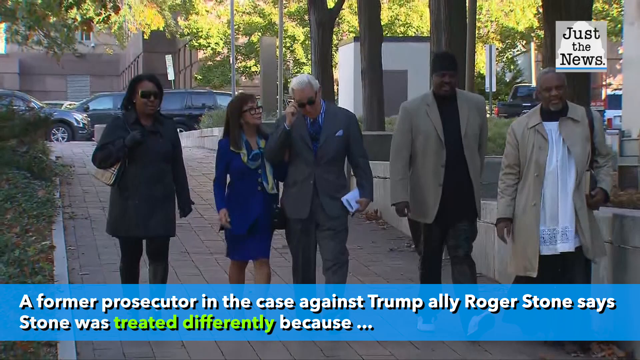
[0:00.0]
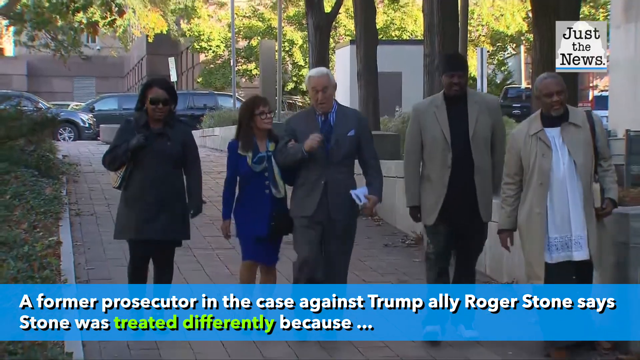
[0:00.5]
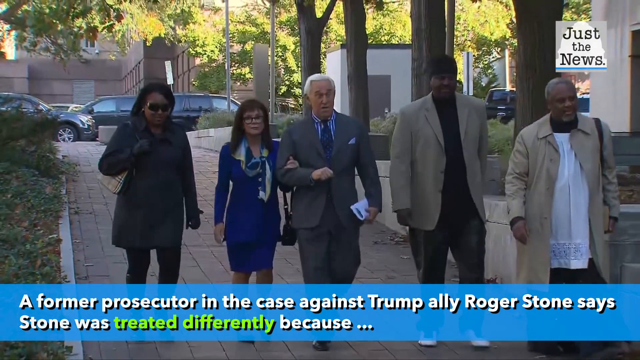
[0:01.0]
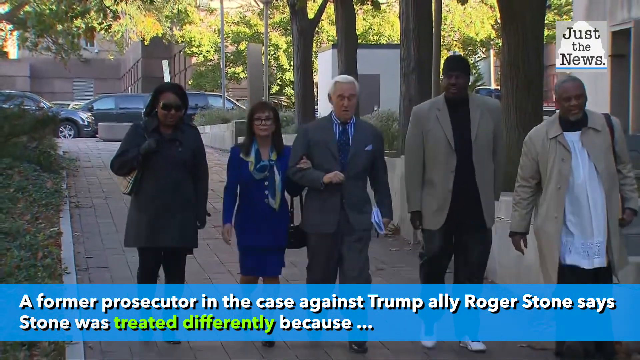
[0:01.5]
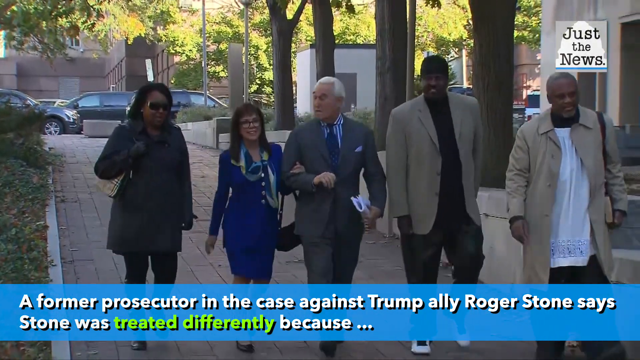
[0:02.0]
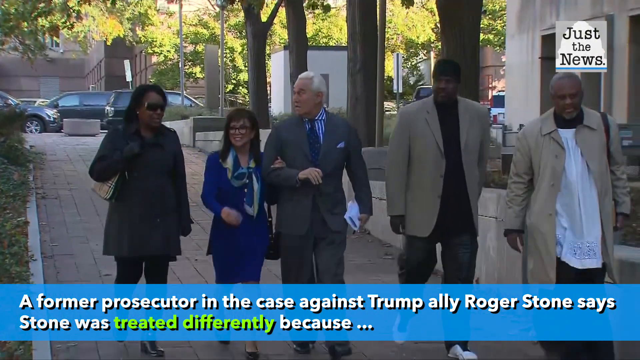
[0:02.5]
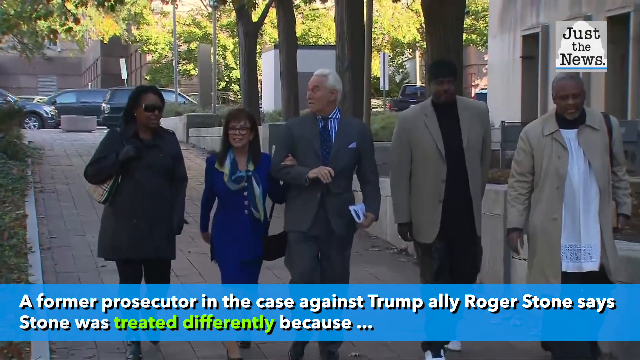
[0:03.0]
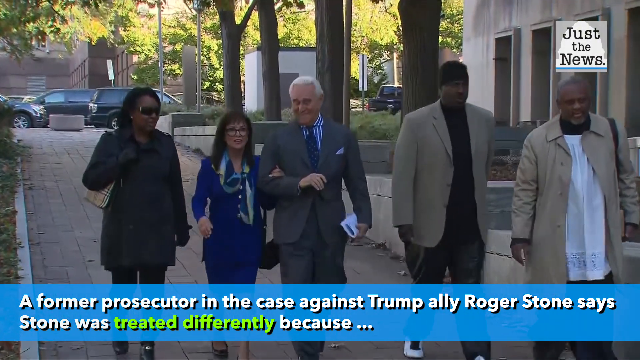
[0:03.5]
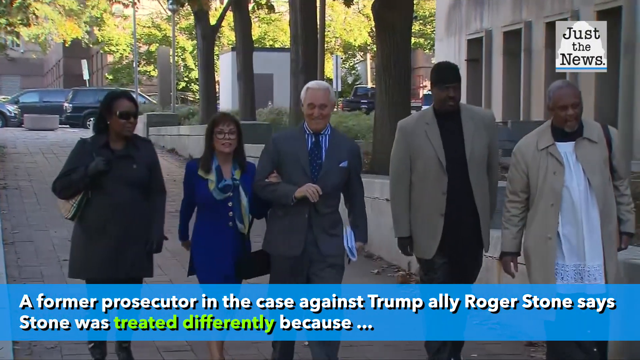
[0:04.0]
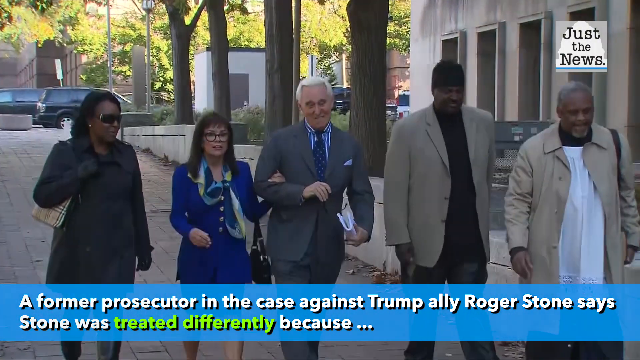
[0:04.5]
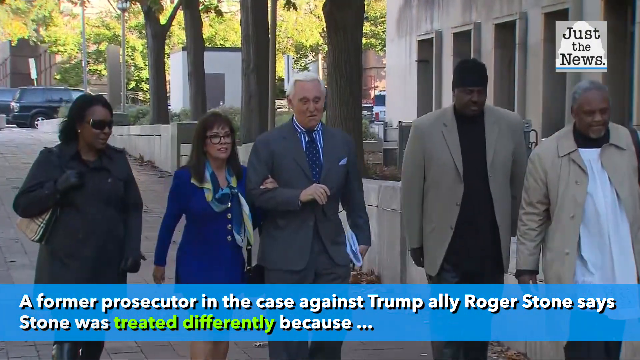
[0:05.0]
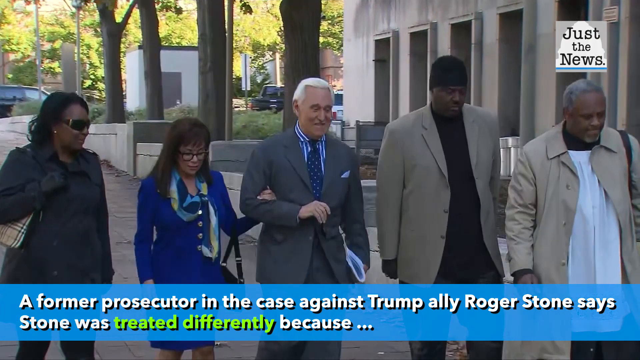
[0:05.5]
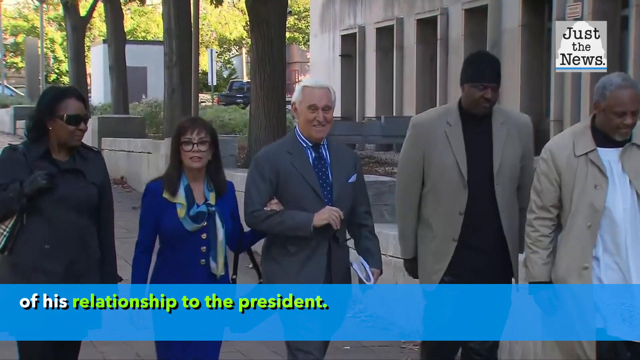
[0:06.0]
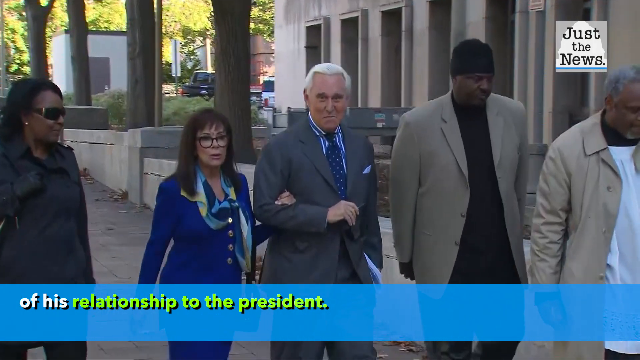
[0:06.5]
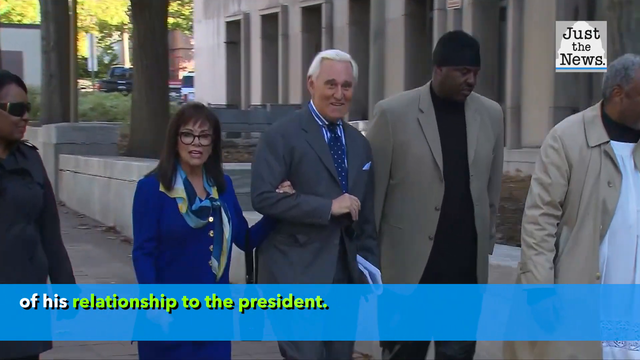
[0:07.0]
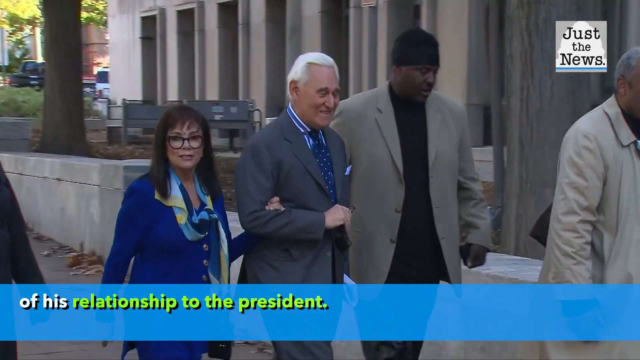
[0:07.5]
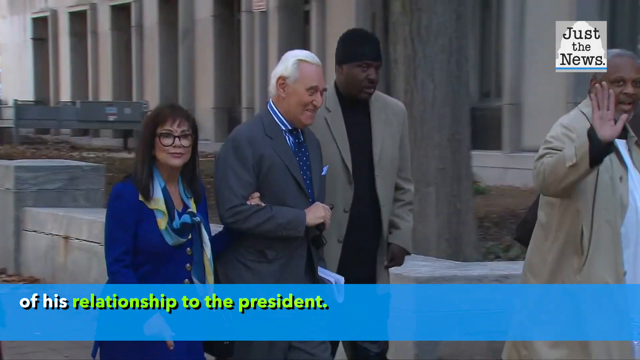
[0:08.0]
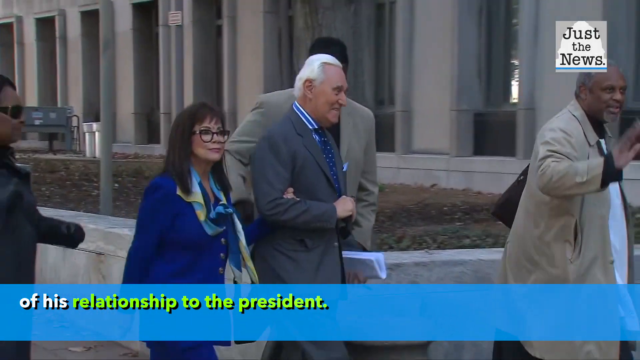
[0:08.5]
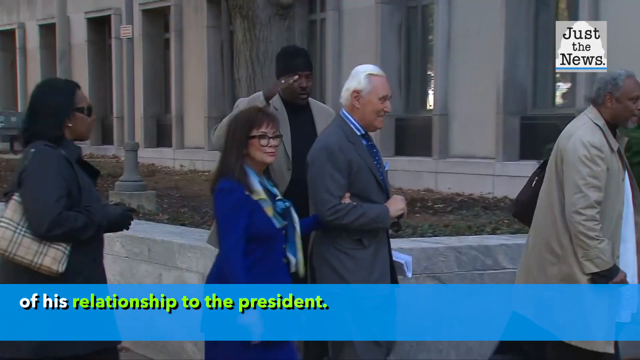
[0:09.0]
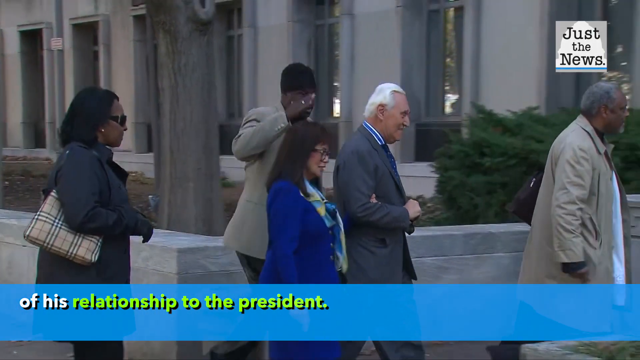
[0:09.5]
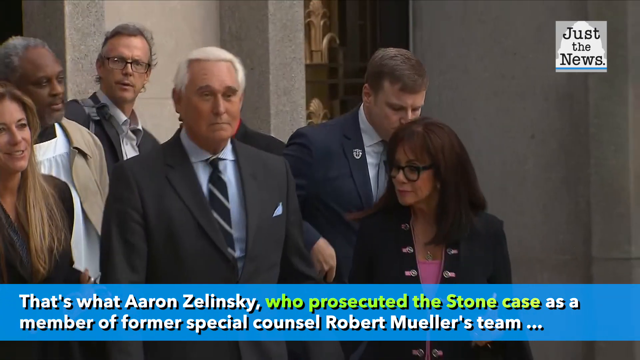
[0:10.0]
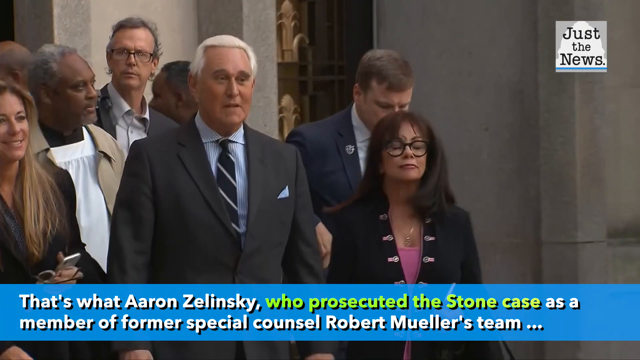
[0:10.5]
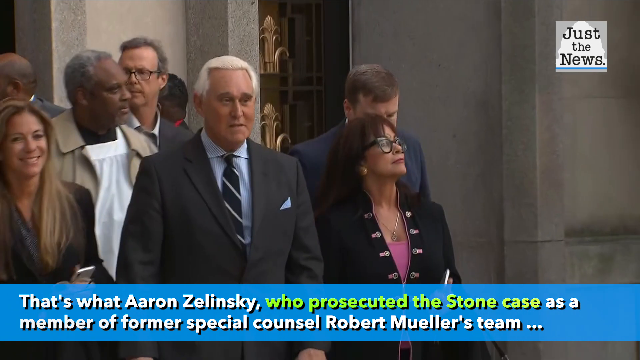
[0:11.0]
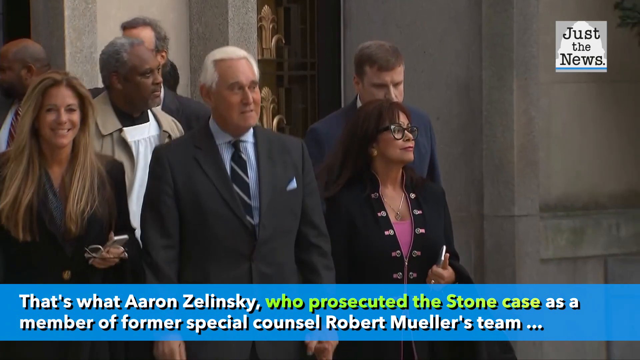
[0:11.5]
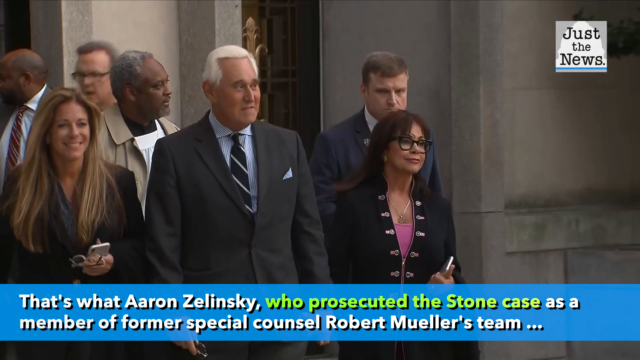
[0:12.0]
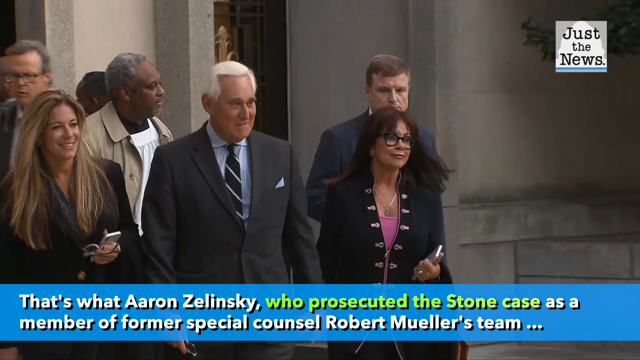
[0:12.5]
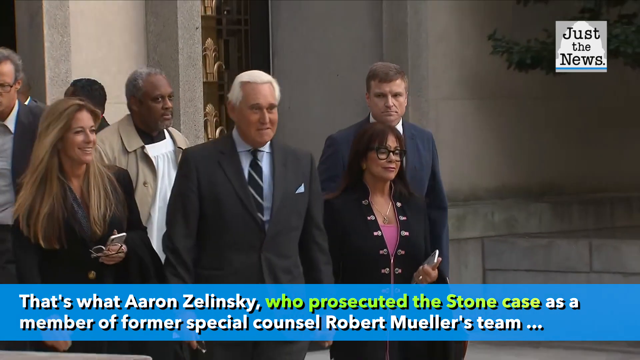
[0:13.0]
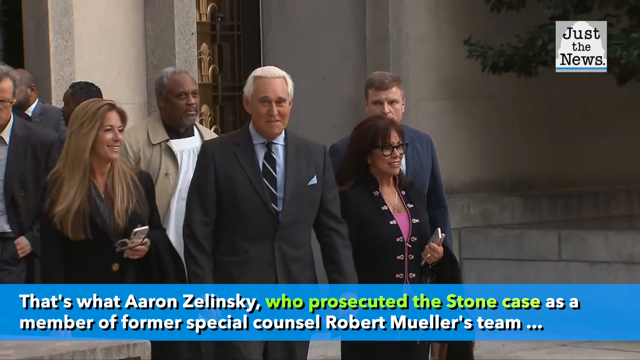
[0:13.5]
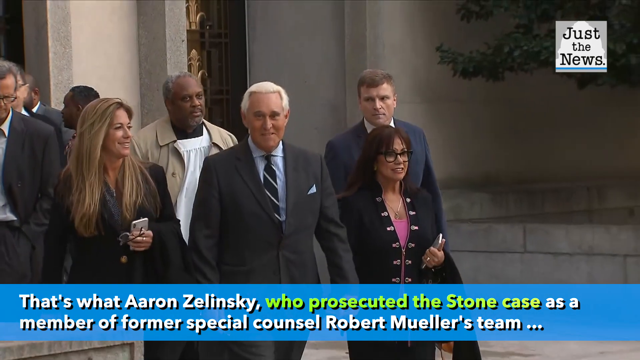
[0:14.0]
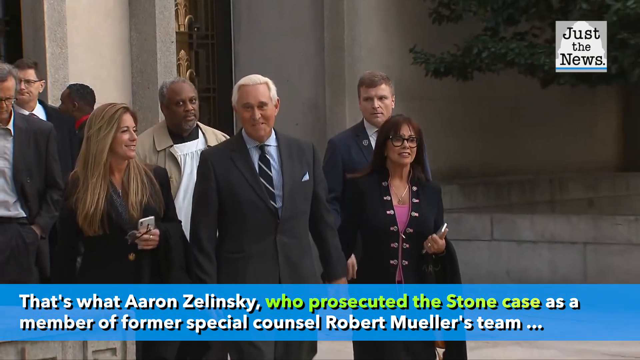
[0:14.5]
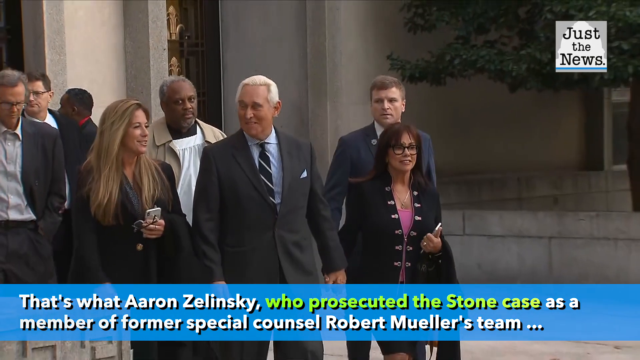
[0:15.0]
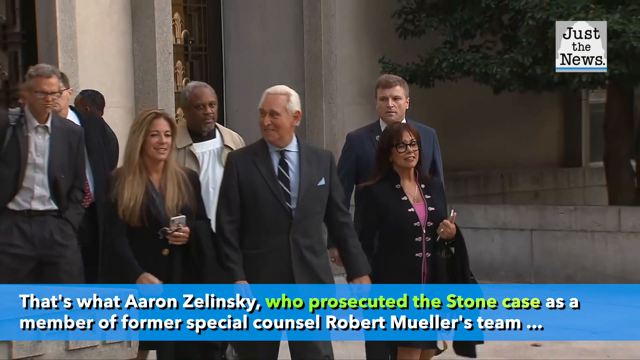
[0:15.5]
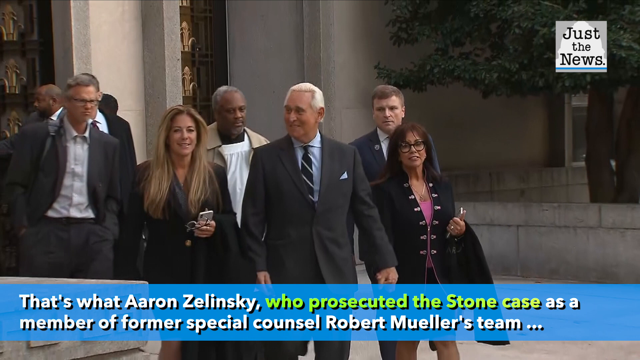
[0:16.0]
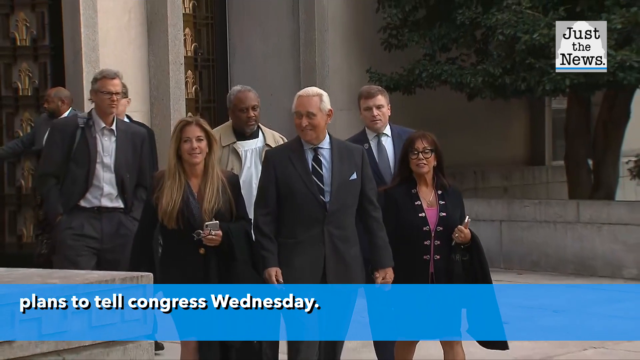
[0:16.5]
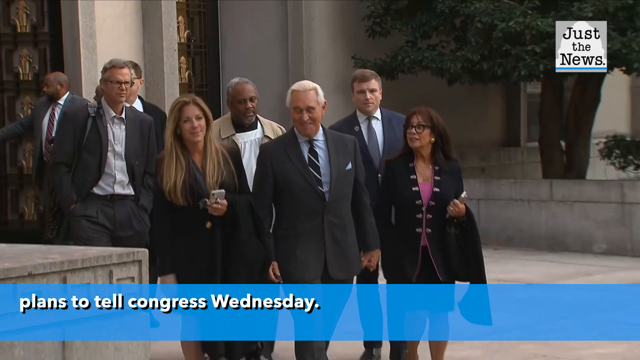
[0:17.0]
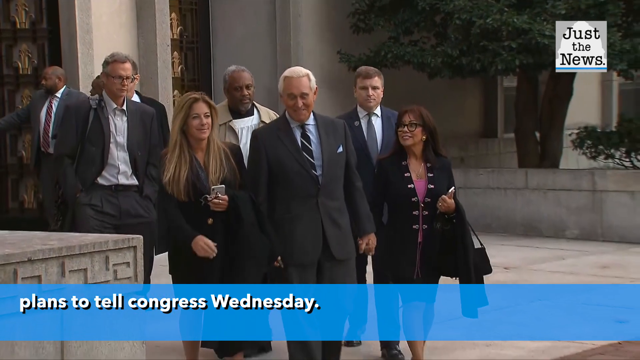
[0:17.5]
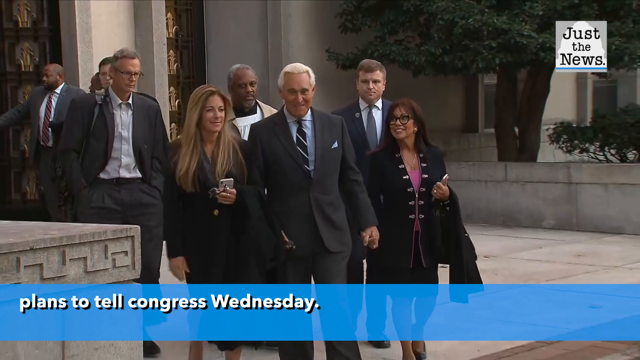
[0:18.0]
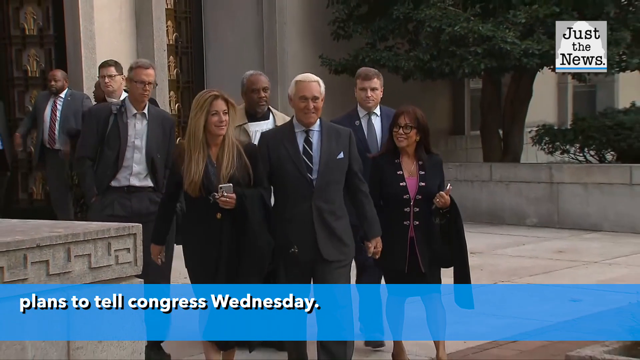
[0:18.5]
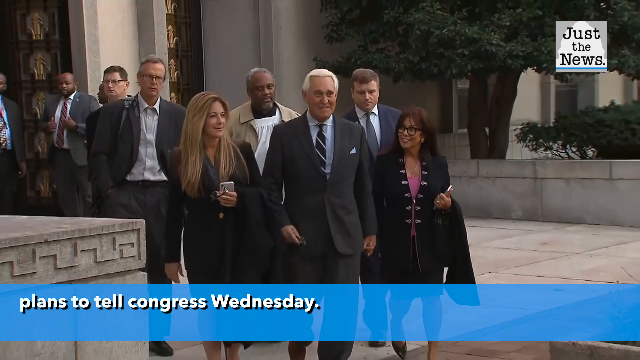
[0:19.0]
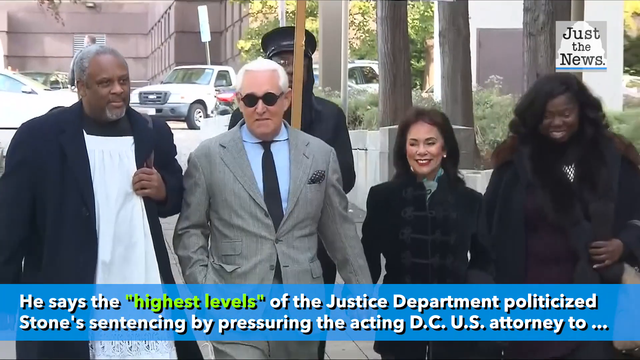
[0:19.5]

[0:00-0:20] Five people walk outside, possibly in a downtown area, heading toward a large building. Text at the bottom of the screen reads "former prosecutor in the case against Trump ally Roger Stone" before it cuts off. An older Caucasian man walks in the center; a woman, possibly his wife, has her arm linked with his and wears a blue suit. The other people are African-American: two men and another woman. All appear to be over 40. The main man, most likely Roger Stone, appears to be in his 70s and has a full head of white hair. He is seen walking with these people and then with more people, smiling most of the time.